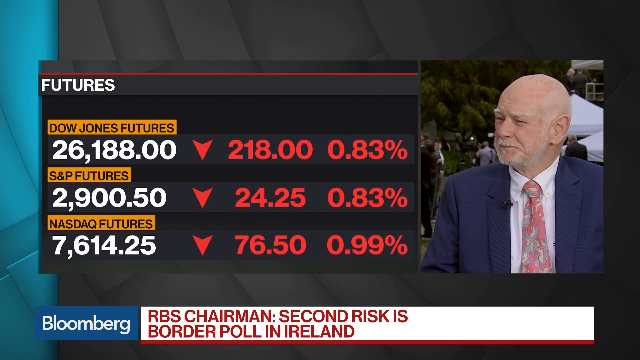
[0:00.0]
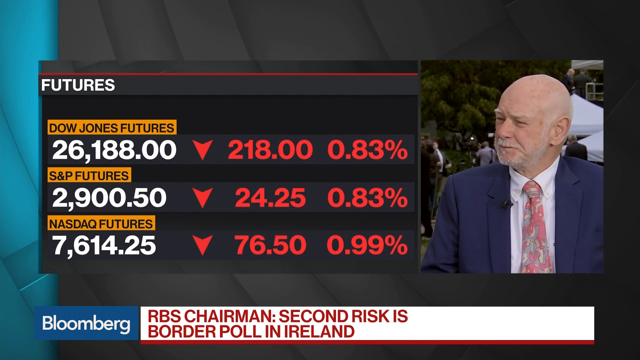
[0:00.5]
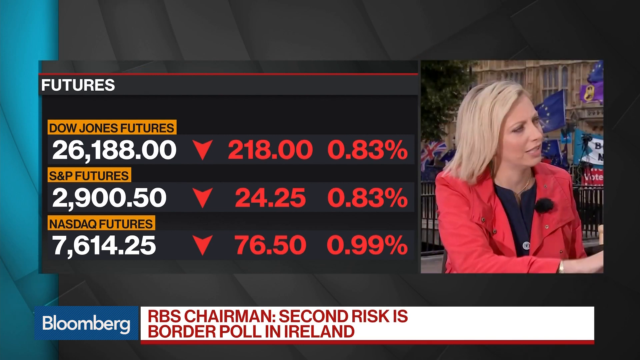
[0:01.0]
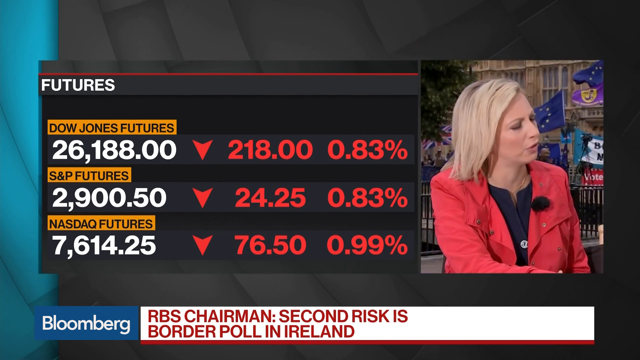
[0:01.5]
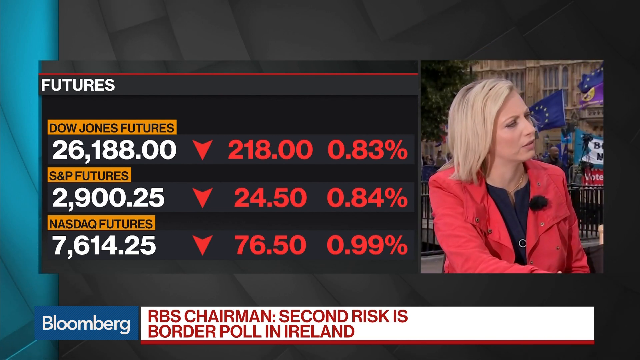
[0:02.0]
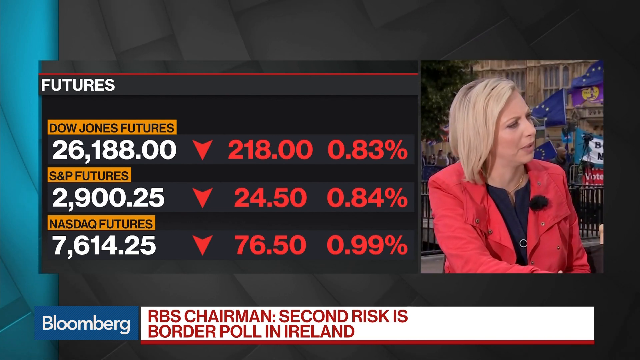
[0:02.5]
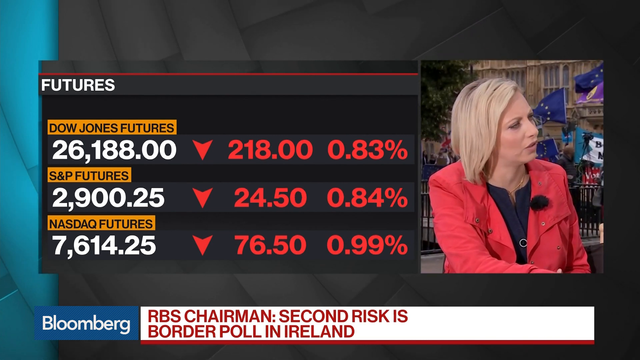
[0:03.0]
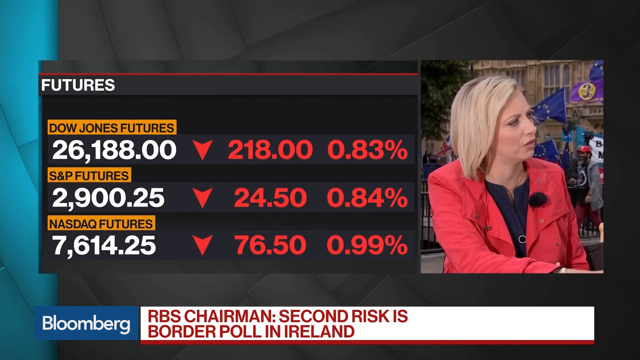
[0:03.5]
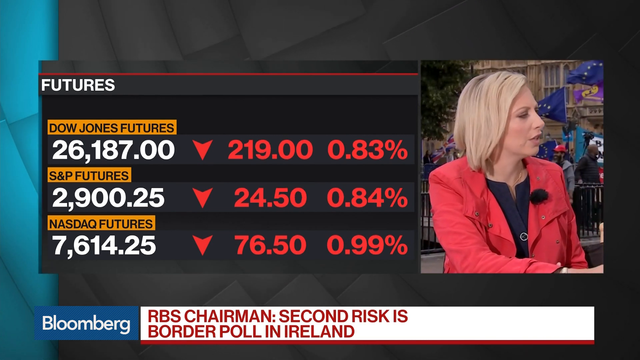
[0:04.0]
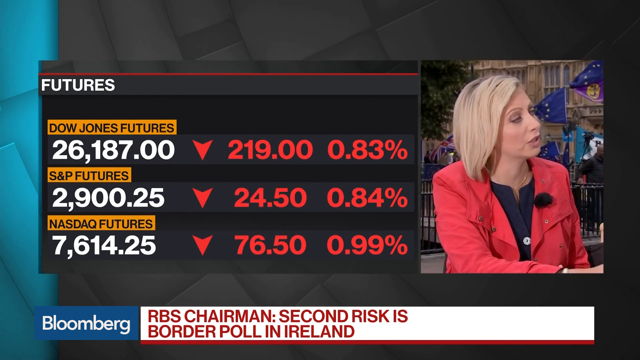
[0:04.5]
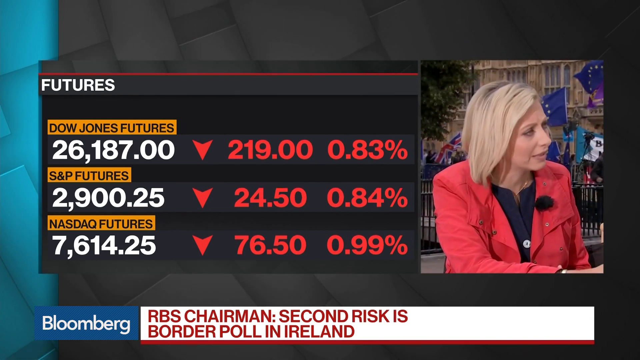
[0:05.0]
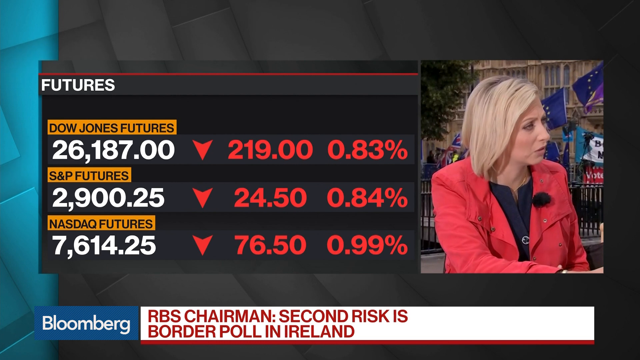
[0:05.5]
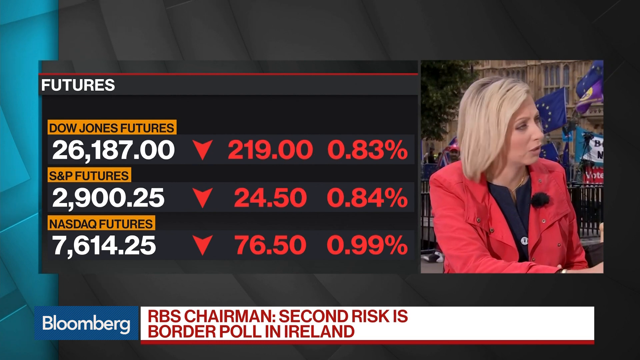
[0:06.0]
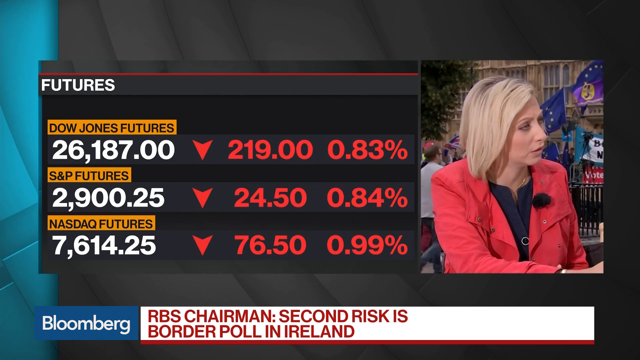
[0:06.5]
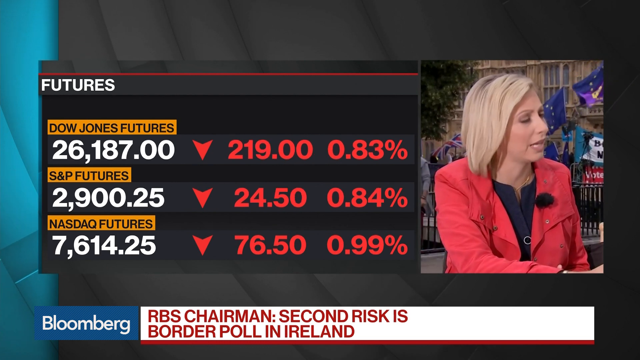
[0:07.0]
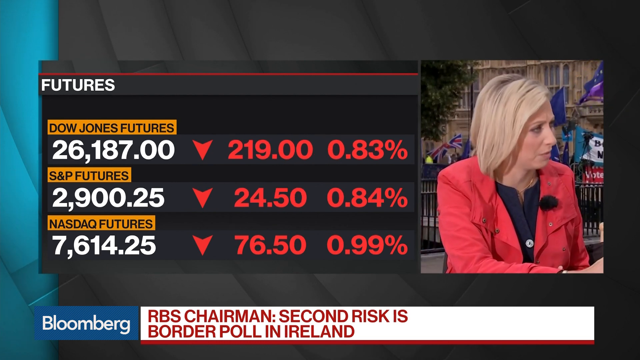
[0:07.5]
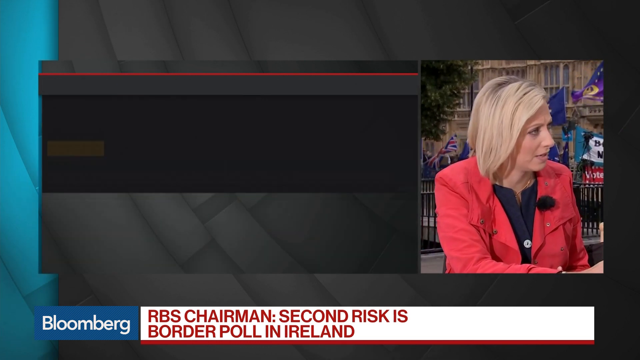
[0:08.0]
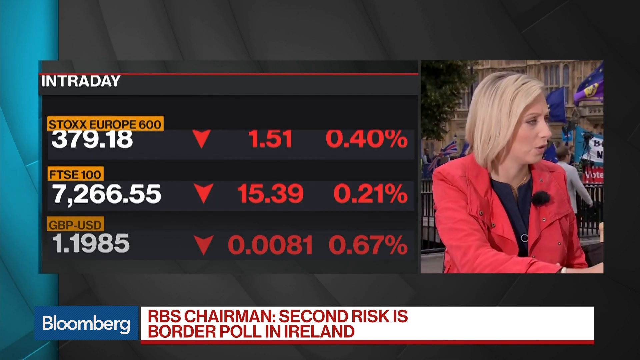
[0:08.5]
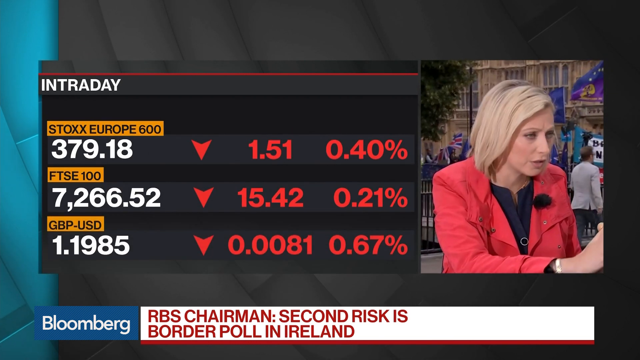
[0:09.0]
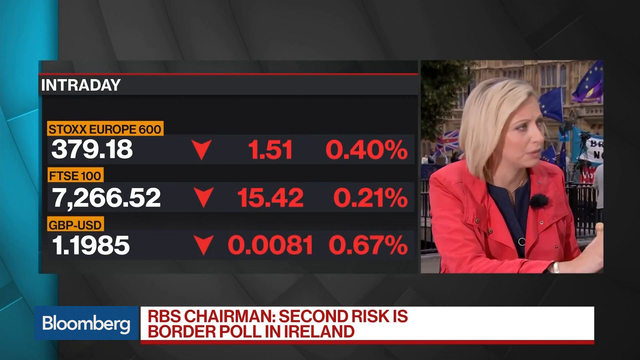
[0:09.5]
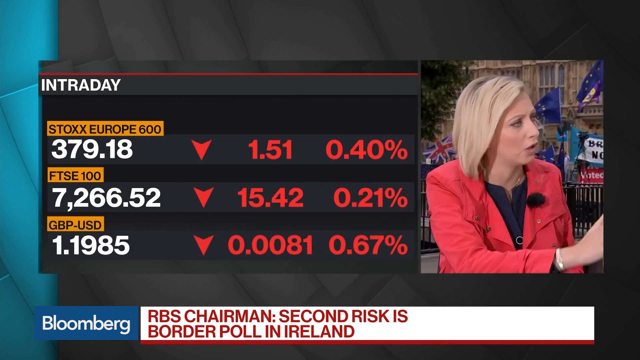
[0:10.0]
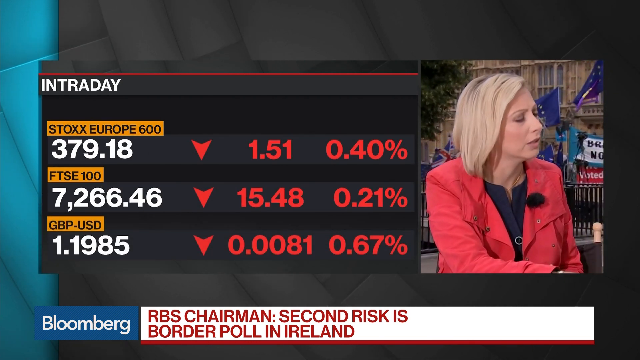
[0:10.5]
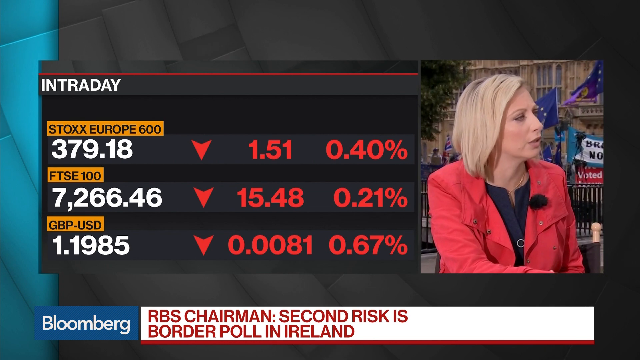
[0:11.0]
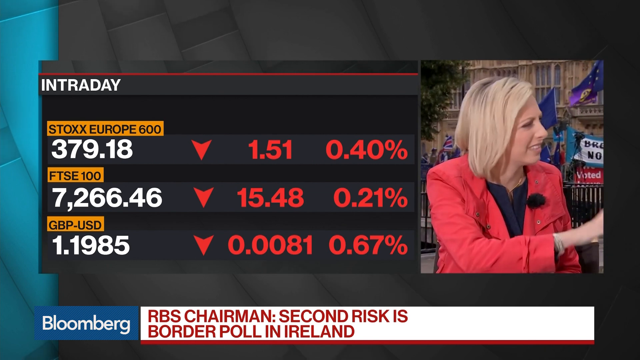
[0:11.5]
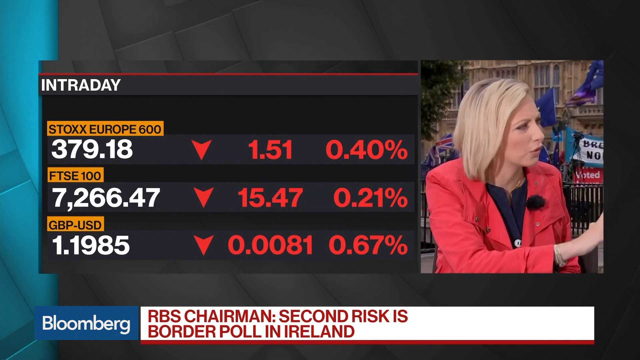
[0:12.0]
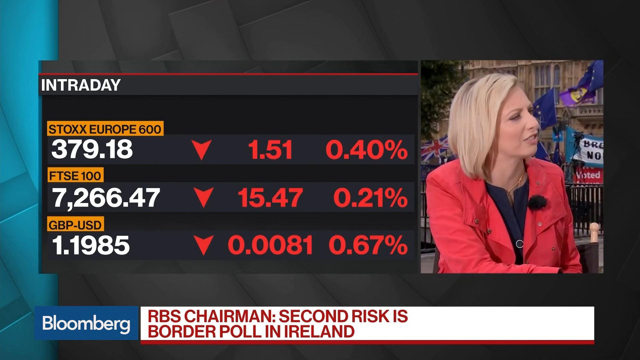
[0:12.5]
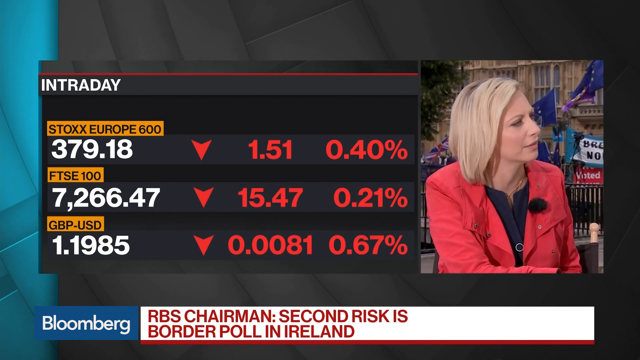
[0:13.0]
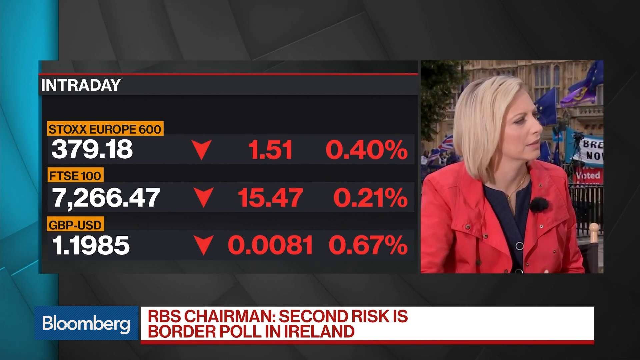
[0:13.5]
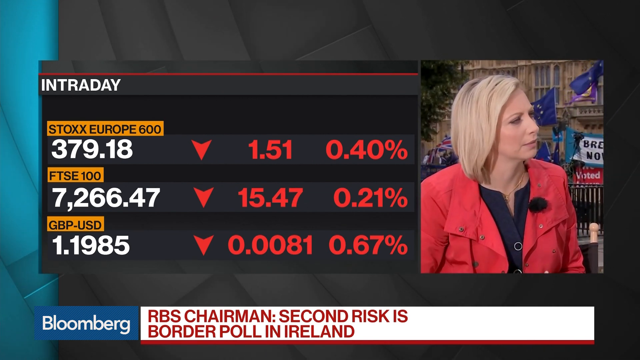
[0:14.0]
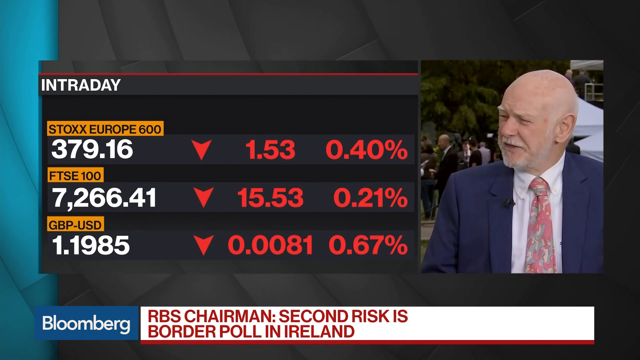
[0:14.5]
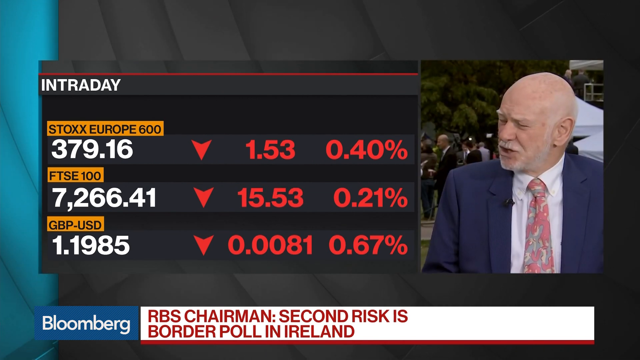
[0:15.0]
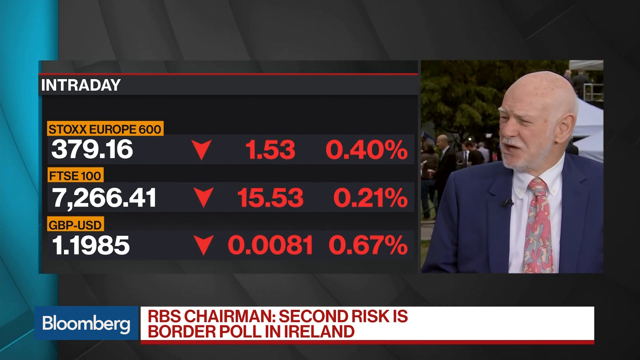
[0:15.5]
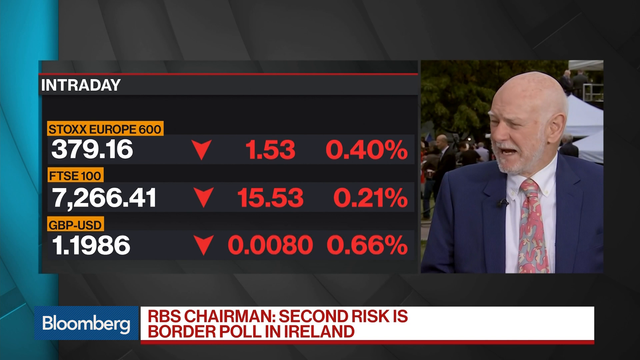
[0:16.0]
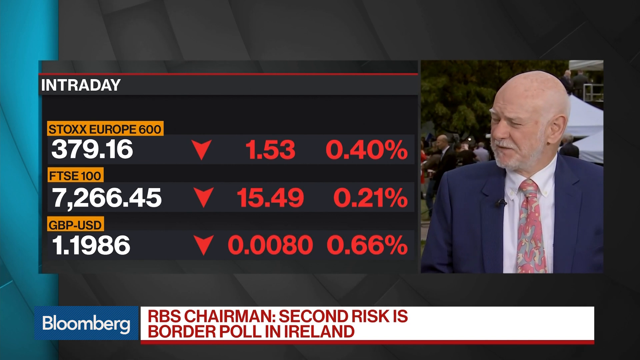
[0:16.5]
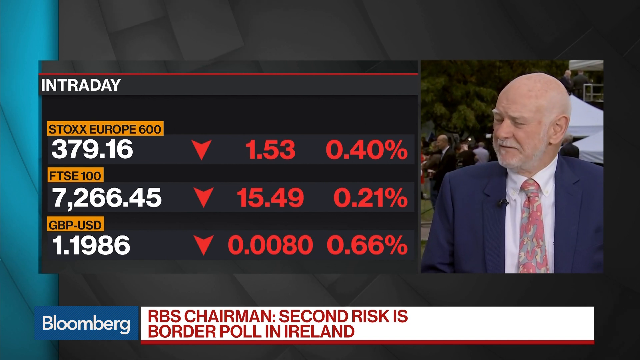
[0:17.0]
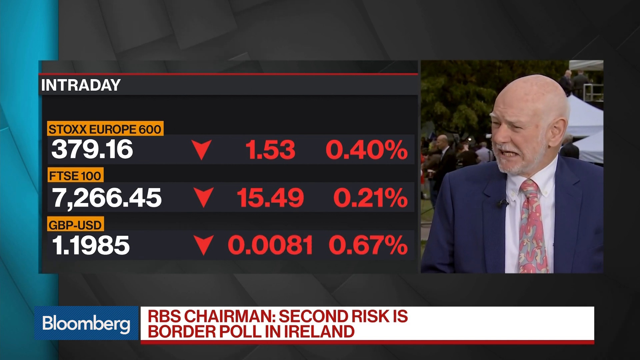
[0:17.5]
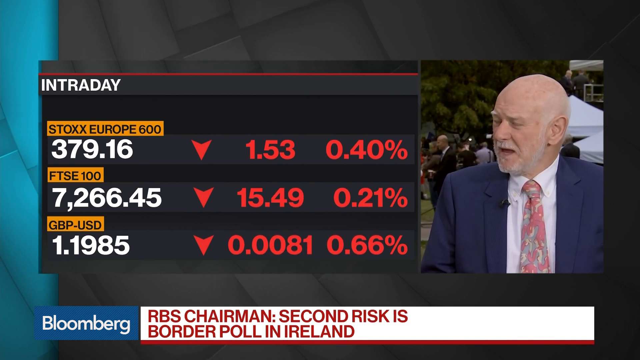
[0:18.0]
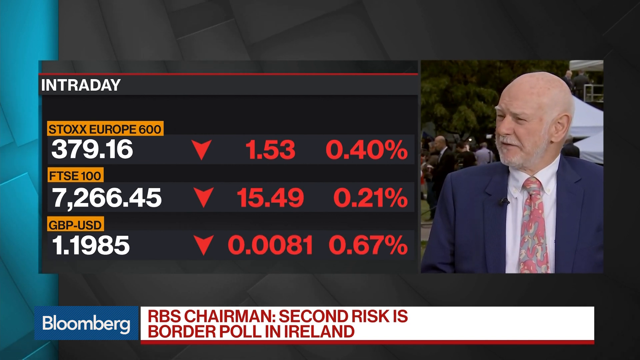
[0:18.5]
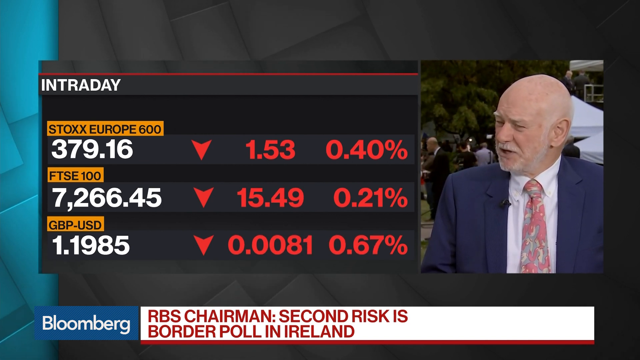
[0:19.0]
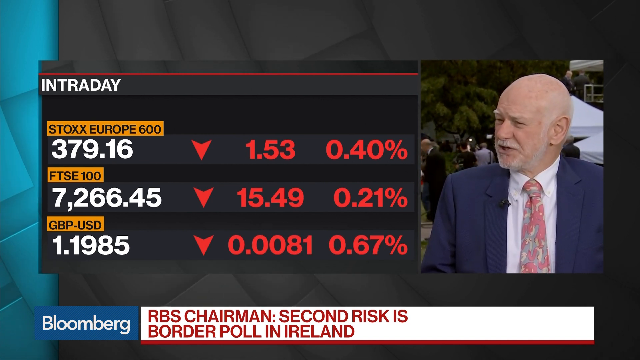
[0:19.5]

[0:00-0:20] A female news presenter wears an orange suit jacket with a black gown underneath. She has shoulder-length gold hair and a microphone attached to her body. She is in discussion with a middle-aged, bald man in a black suit, a striped white shirt and a flowery, peach-coloured tie. They are in a public place, maybe a park, where people are coming and going. On screen are futures figures: Dow Jones futures at 26,188.00, down 218.00, 0.83%; S&P futures at 2,900.50, down 24.25, 0.88%; and NASDAQ futures at 7,614.25, down 776.50, 0.99. Beneath them, text refers to the RBS Chairman and a second risk being a border poll in Ireland.